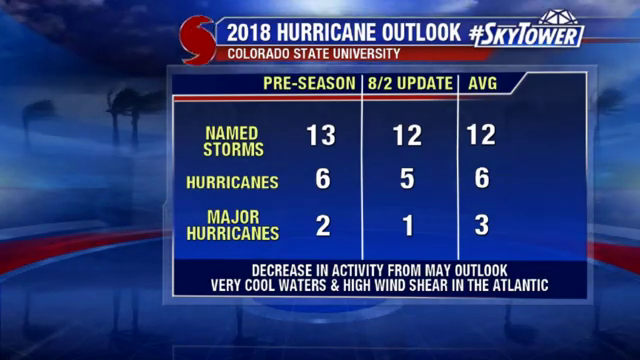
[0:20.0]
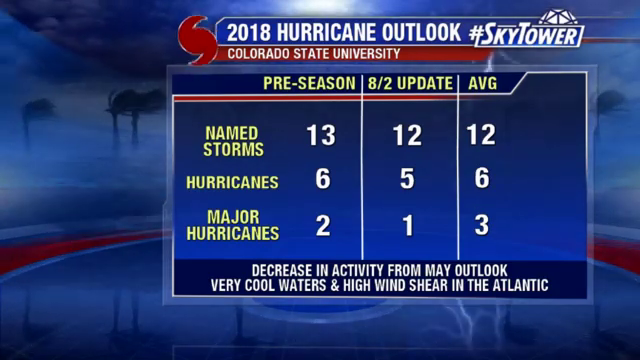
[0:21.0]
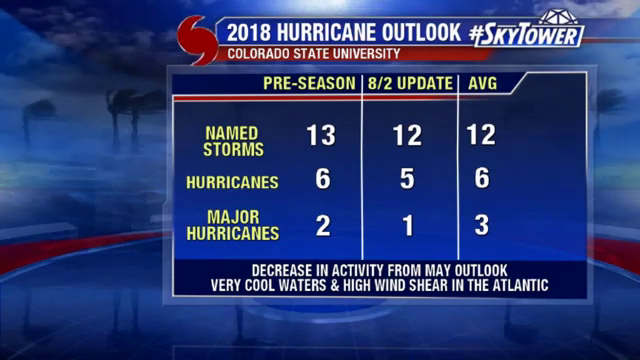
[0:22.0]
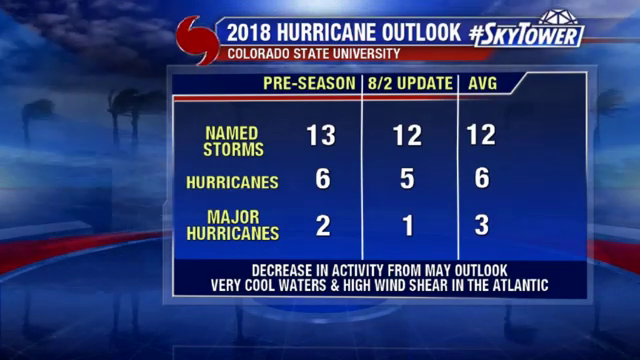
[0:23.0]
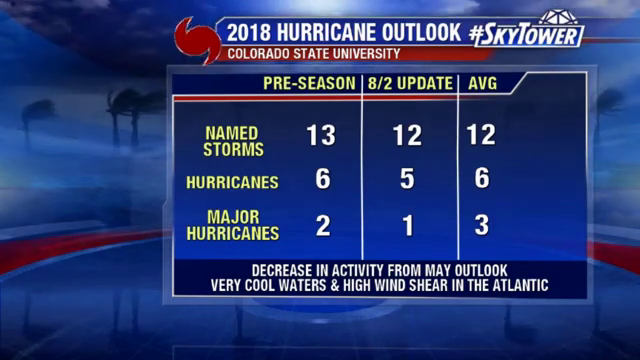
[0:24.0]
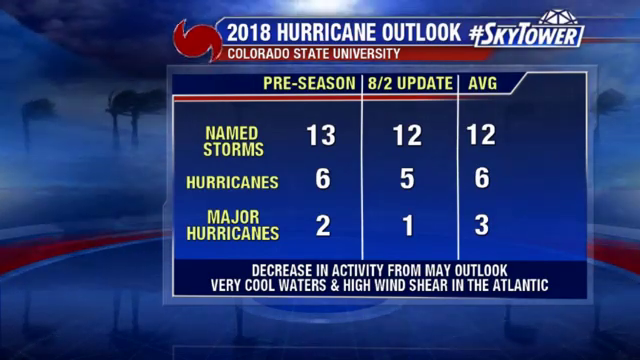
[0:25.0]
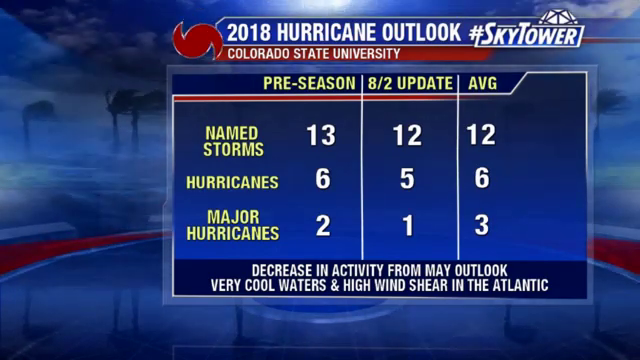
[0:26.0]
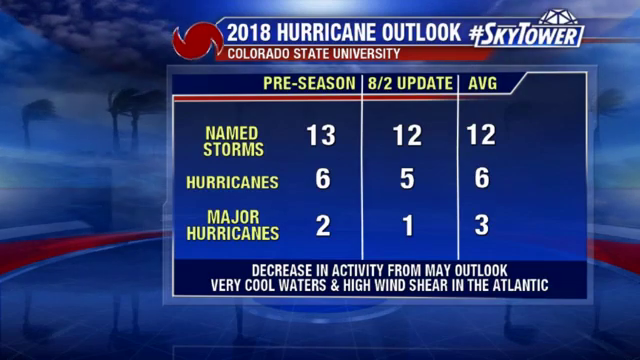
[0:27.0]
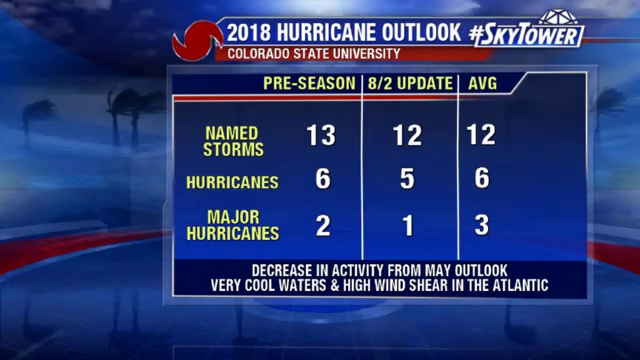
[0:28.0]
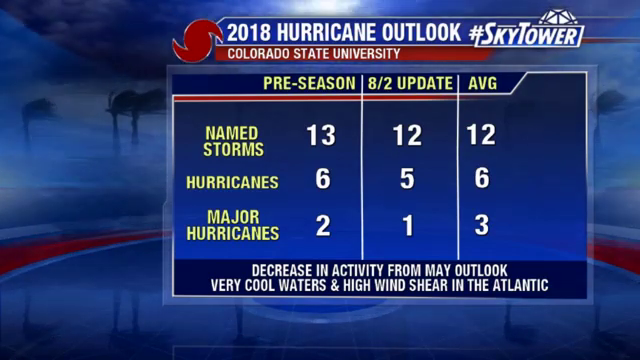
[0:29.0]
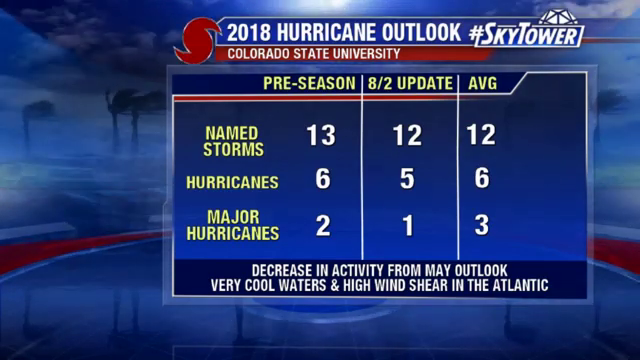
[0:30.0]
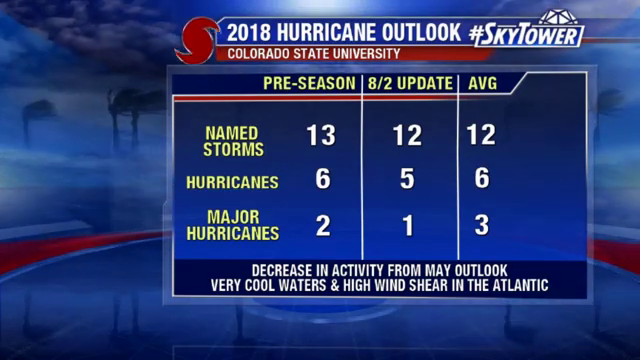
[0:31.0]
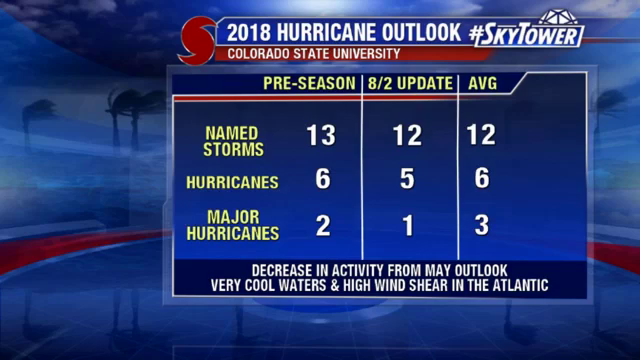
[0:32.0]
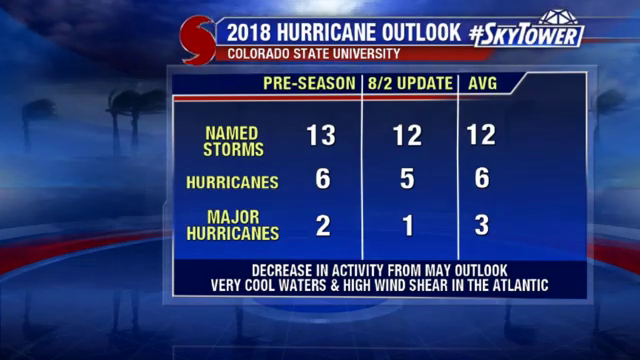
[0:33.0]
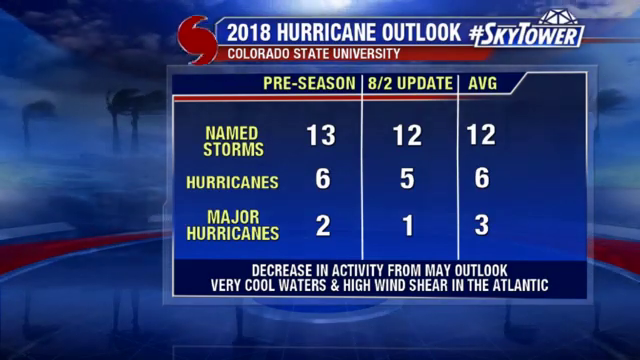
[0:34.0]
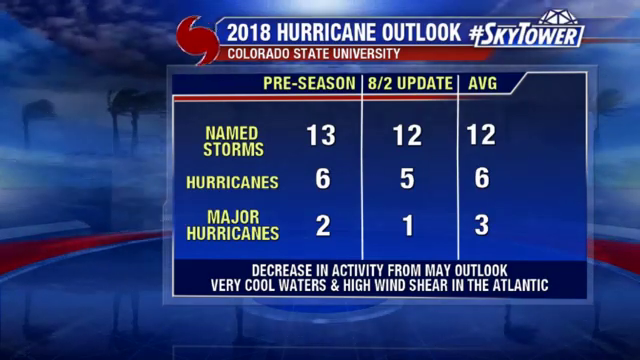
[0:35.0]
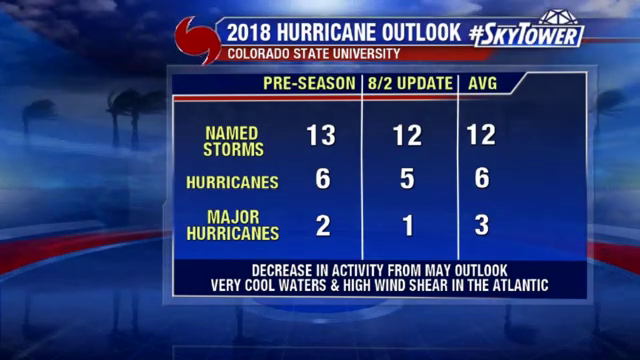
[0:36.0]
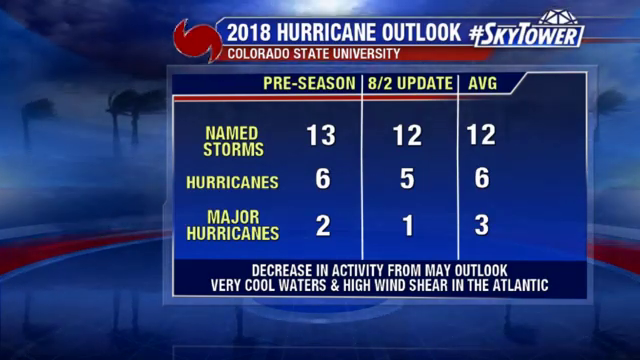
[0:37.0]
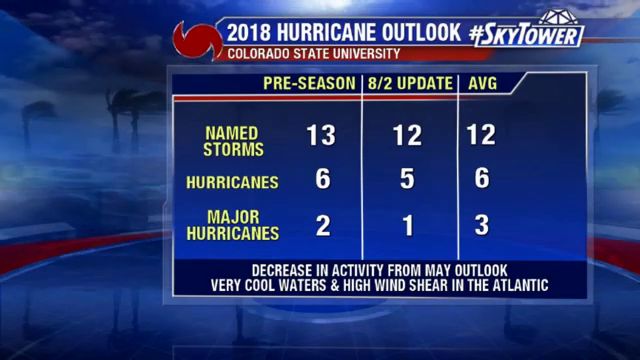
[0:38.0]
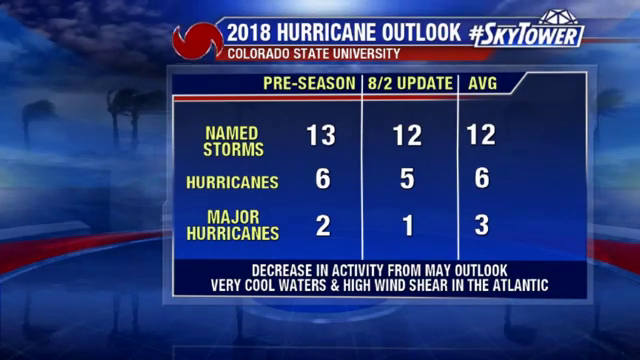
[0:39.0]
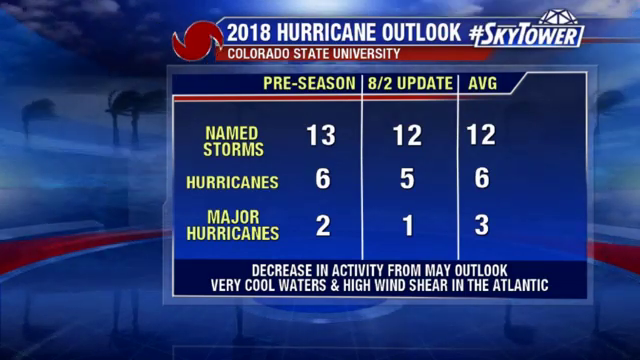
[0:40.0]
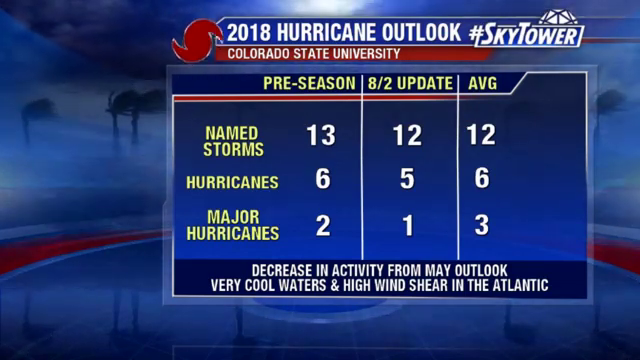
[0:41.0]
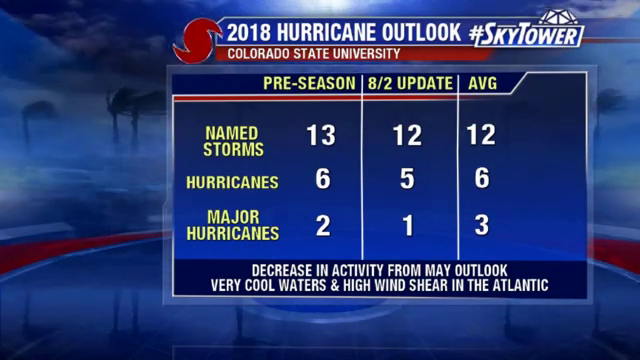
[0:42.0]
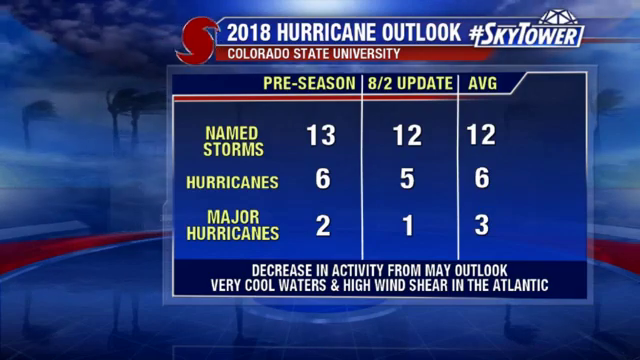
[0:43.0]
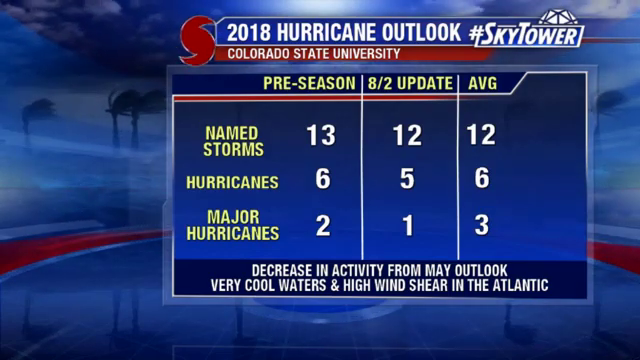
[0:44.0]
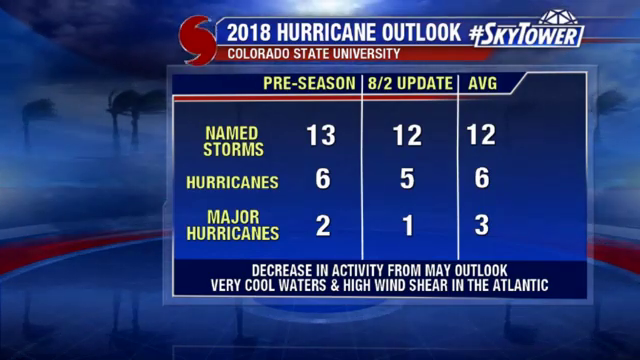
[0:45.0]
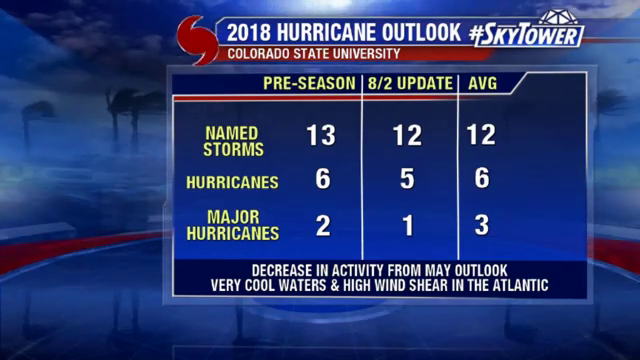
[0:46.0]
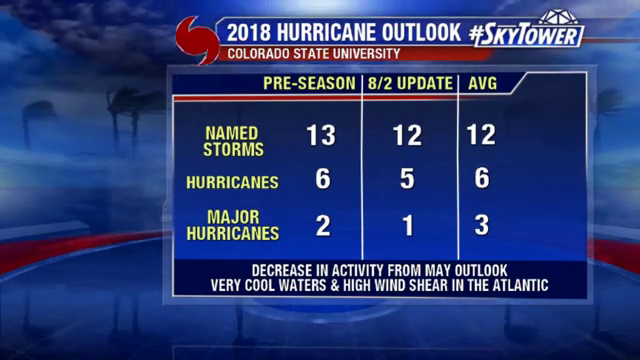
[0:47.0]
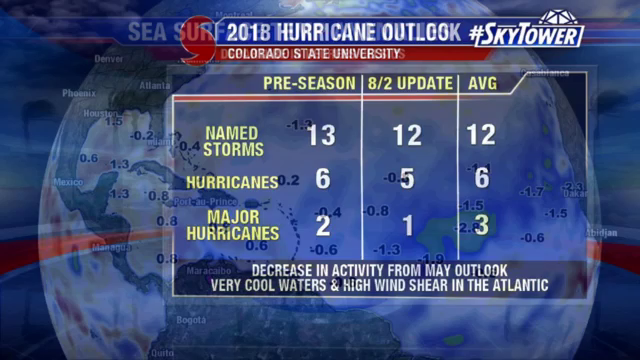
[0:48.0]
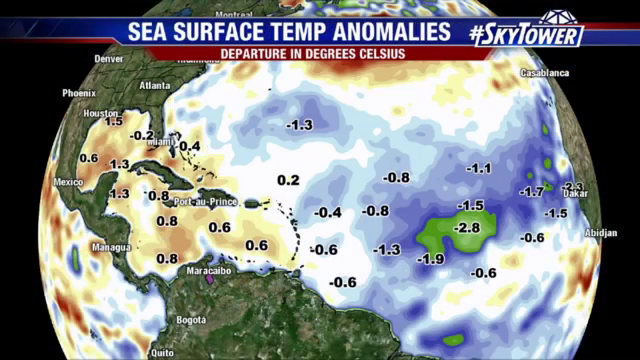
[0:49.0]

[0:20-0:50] The 2018 hurricane outlook from Colorado State University is on screen, with a red logo next to it that looks almost like an S, a fatter S spinning around in circles. Behind the square containing the columns is a blue background with a little red on the sides, trees blown in the wind, and clouds. The chart has three columns, "pre-season," "August 2nd update" and "average," with the row titles "name storms," "hurricanes" and "major hurricanes" on the left. The view then pans to a globe labeled "sea surface temp anomalies" and "departure in degrees Celsius," showing temperatures for different areas, apparently of the sea surface, such as -1.3, 0.2 and -0.4. Spots on the globe are blue, white, yellow and green.